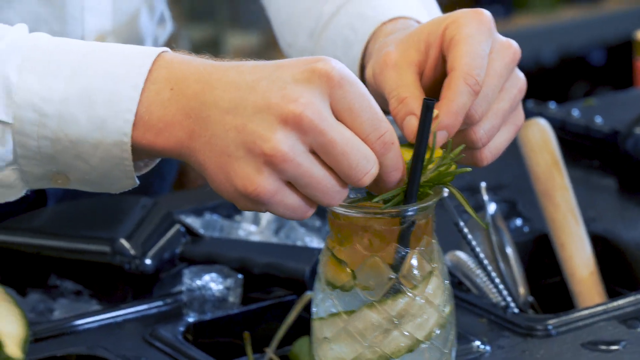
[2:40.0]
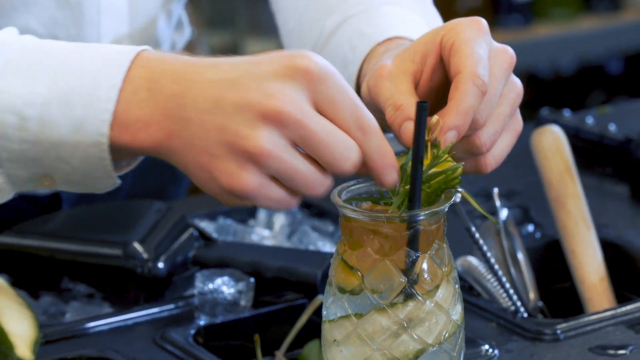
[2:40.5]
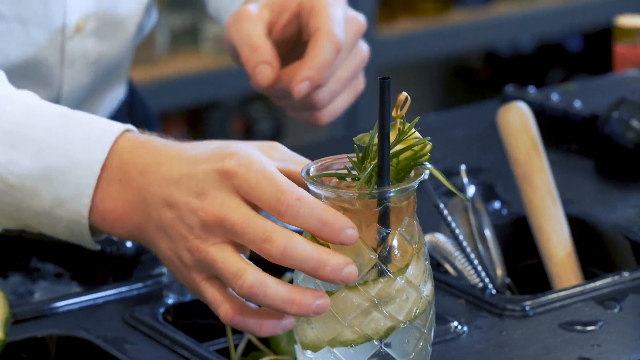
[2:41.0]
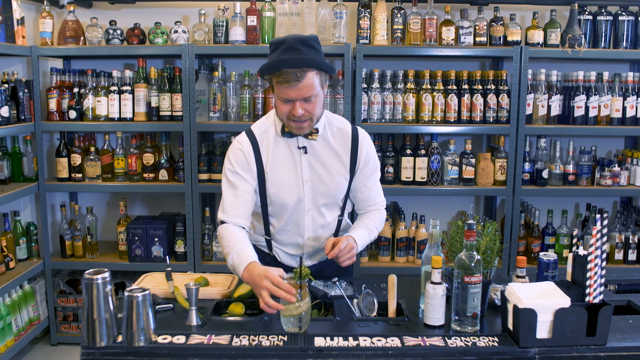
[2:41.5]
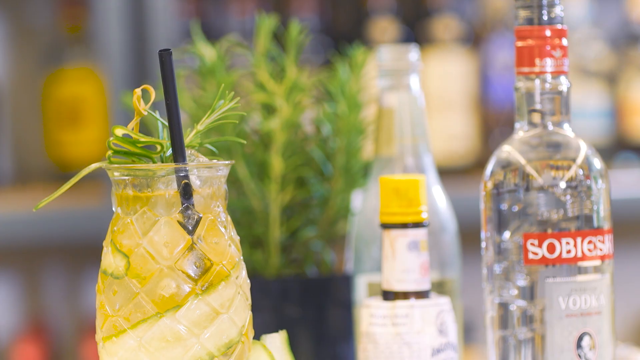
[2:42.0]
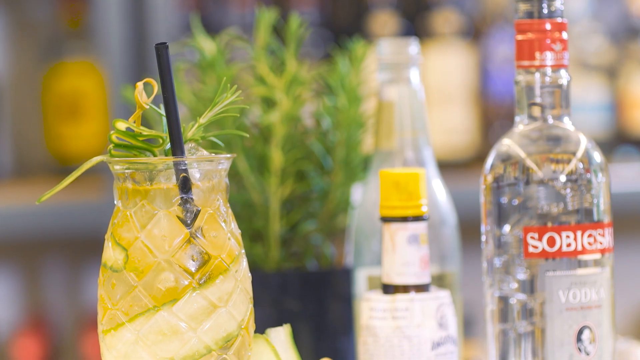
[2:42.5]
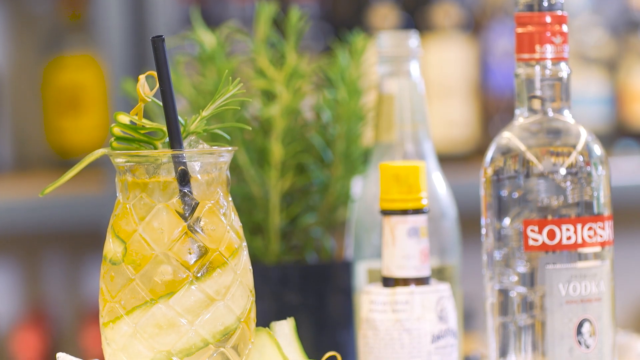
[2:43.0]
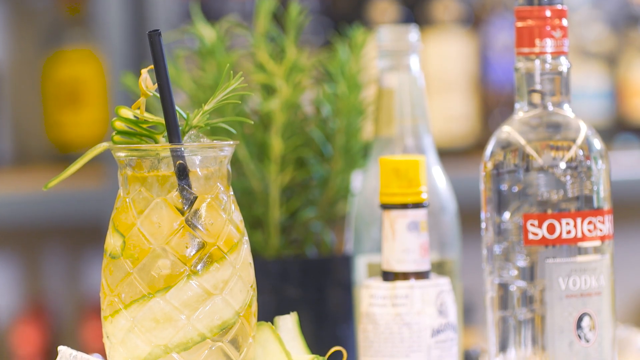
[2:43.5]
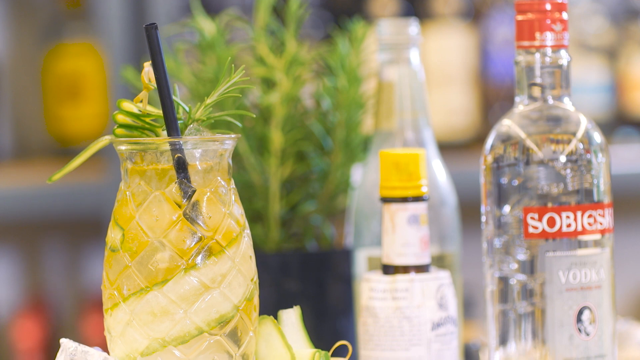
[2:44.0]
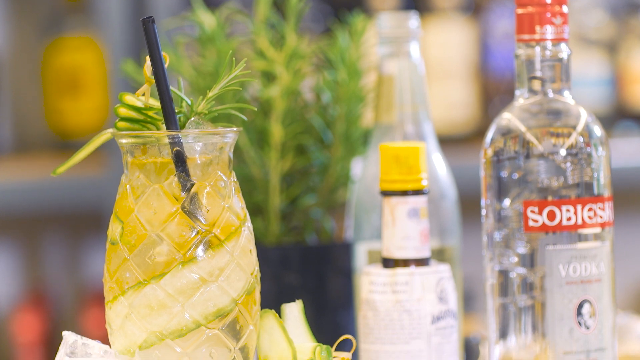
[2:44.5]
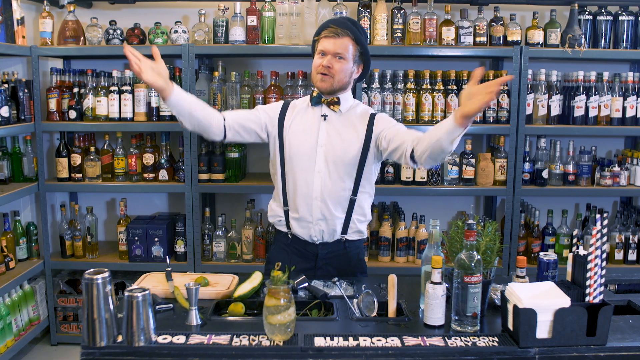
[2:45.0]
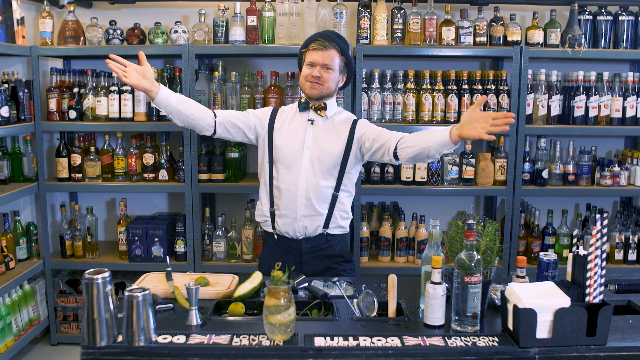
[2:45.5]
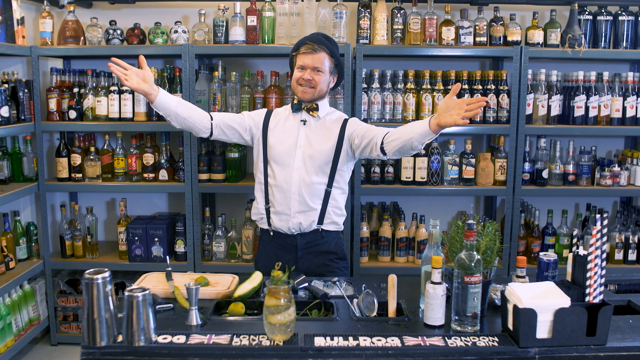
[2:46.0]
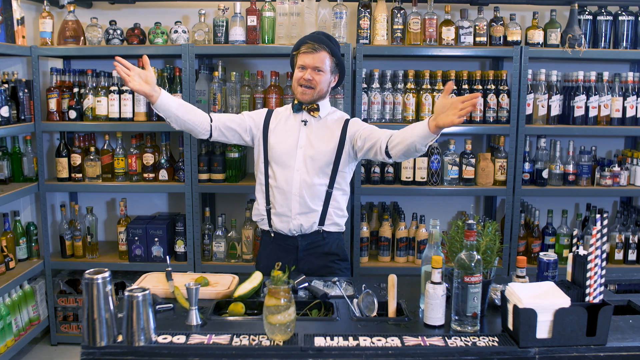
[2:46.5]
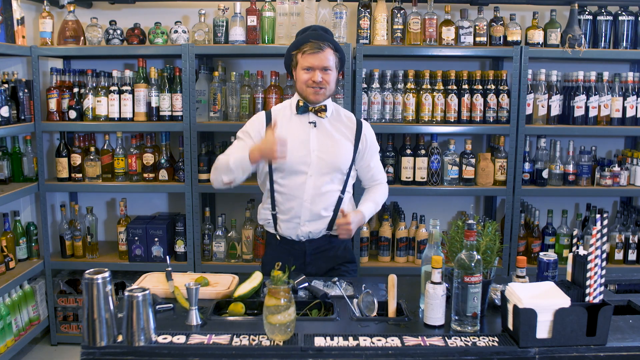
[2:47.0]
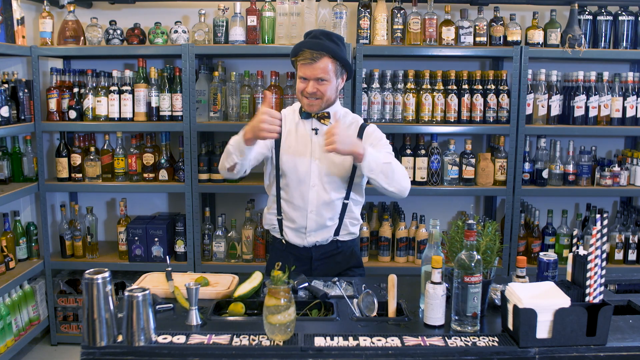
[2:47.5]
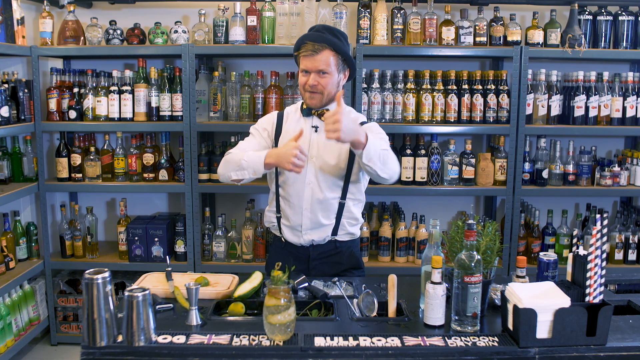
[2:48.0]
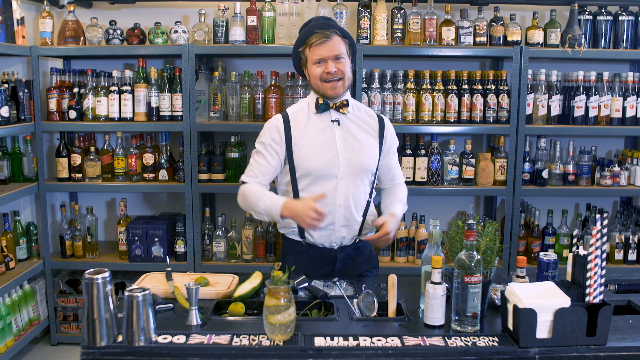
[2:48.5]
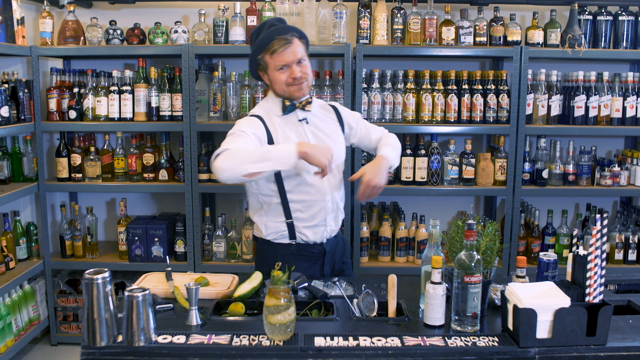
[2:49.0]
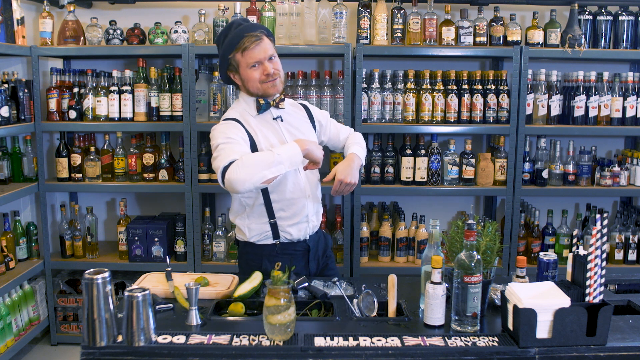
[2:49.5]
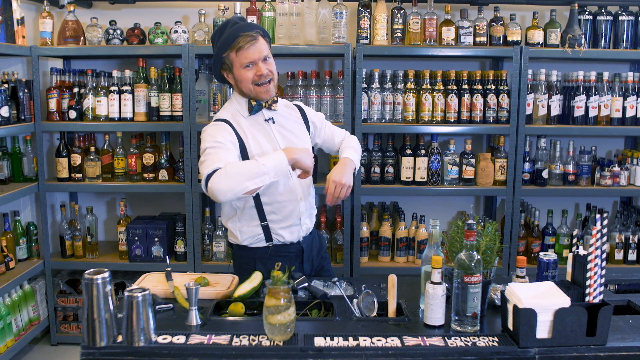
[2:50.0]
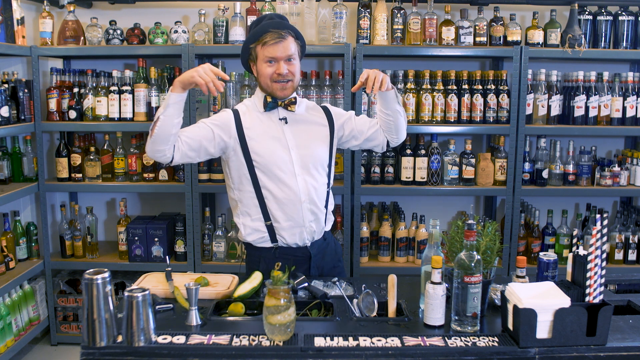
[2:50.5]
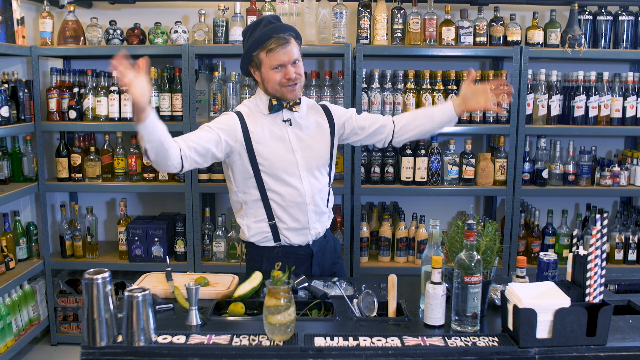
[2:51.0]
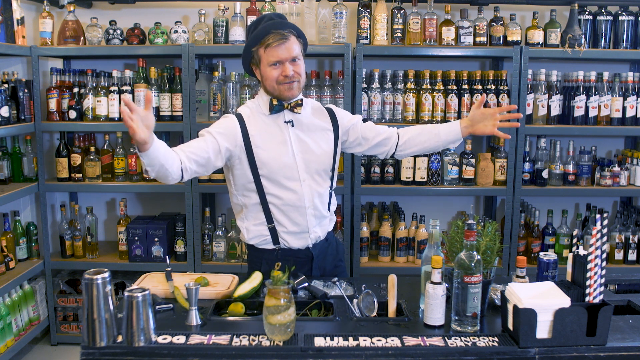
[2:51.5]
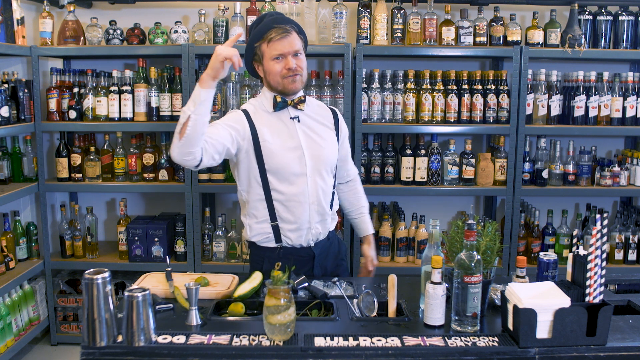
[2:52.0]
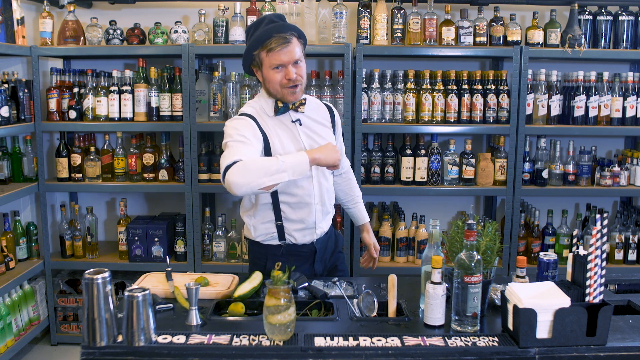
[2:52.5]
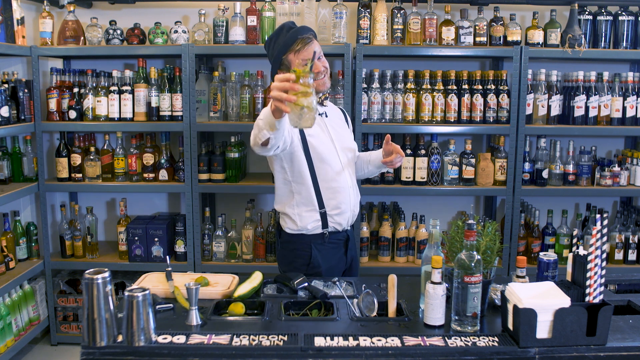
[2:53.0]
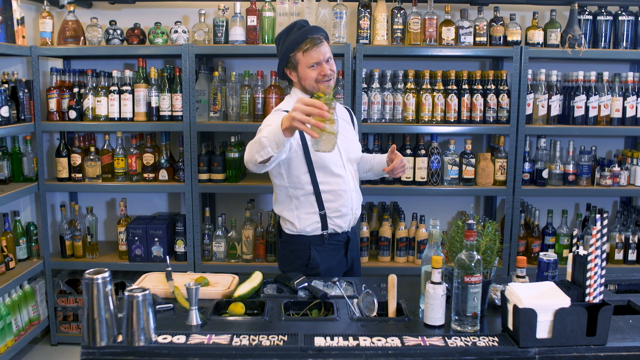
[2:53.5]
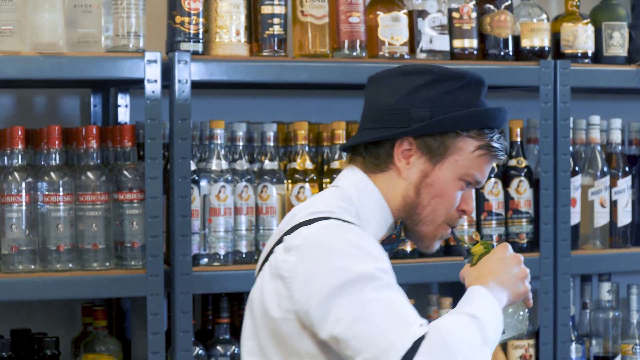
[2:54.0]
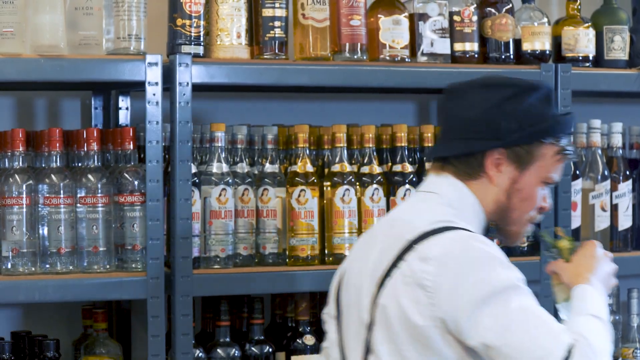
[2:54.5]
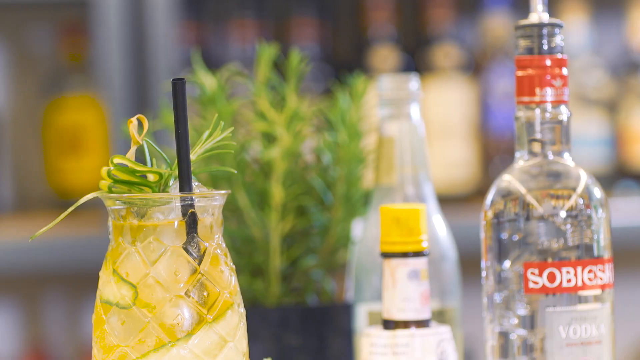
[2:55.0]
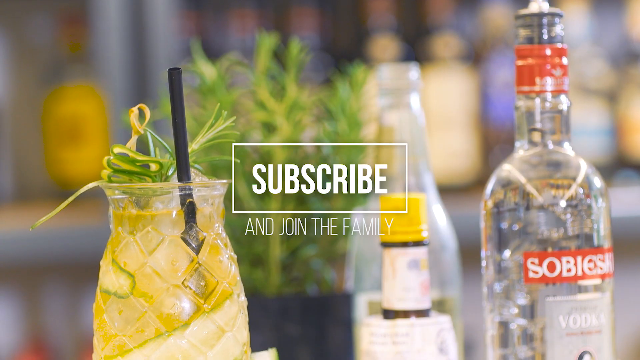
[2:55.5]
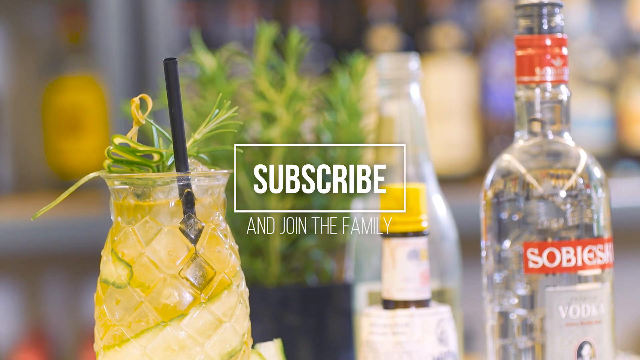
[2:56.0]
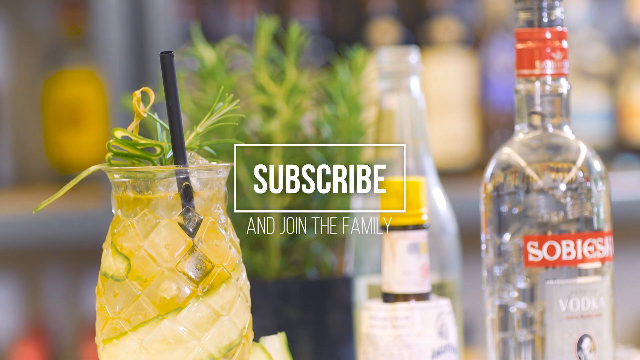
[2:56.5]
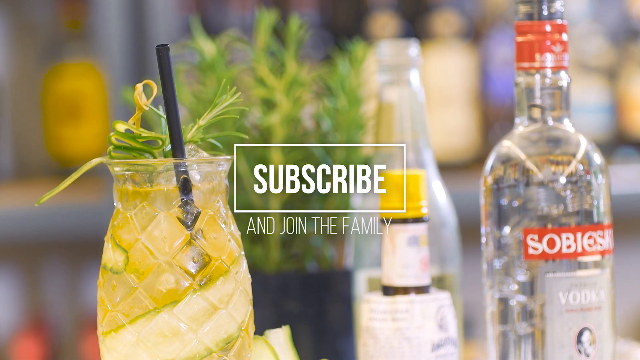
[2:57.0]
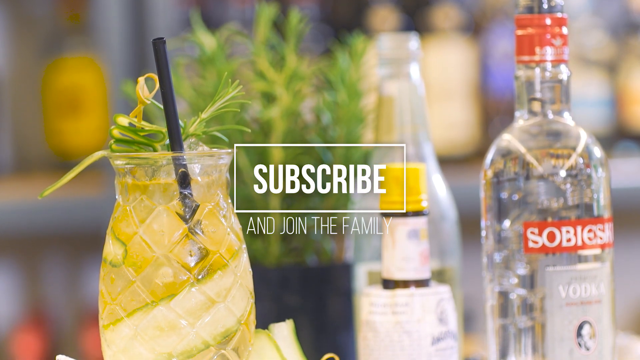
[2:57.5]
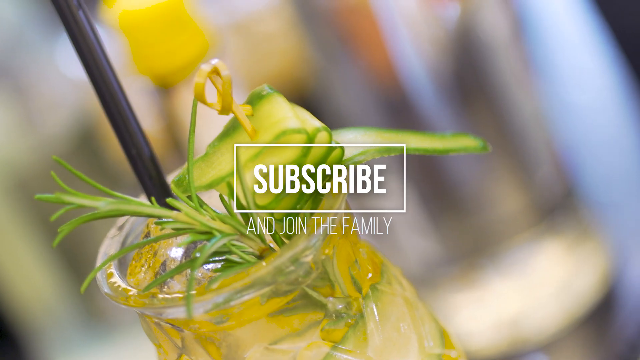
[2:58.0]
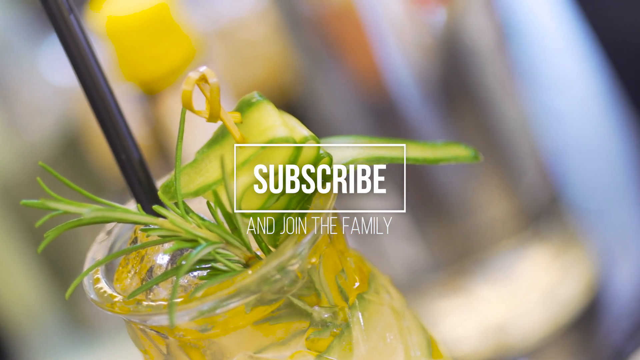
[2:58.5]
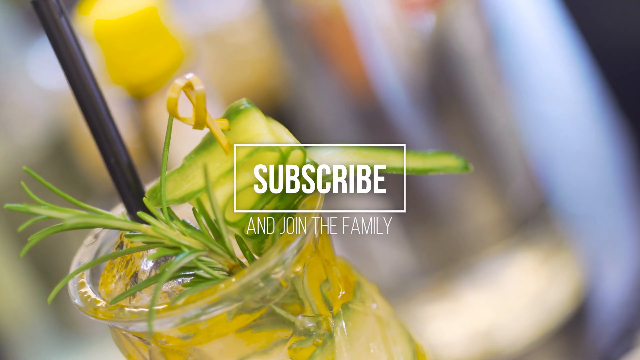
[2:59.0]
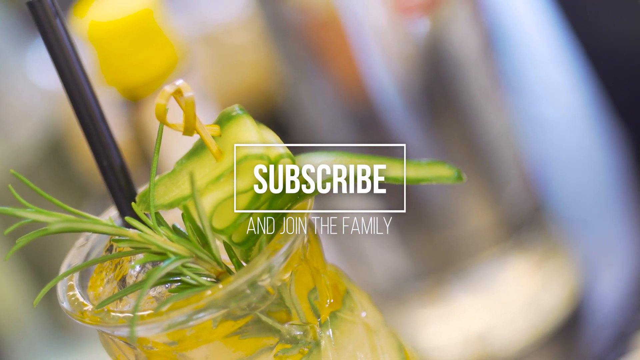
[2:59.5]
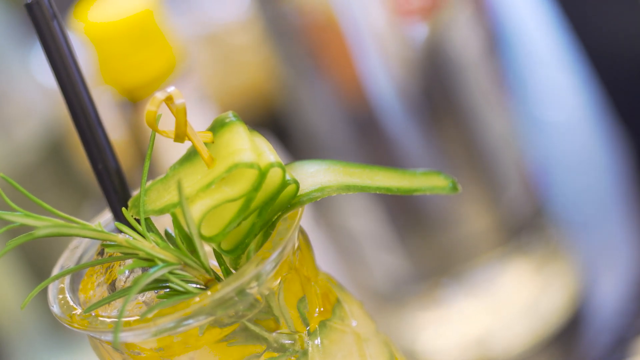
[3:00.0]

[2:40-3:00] In the final phase of the Moscow Mule preparation, Rasmus uses two hands to insert a black straw. The video transitions to the fully prepared Moscow Mule in a glass cup stylized like a pineapple, with the Angostura Bitter bottle with a yellow cap and the vodka bottle with a red cap next to it. The glass with the drink revolves. Rasmus then has both hands extended out as he speaks with excitement, and gives a thumbs up with both hands. He switches position, holds the drink in his hand, takes a sip and walks away. The video transitions back to the glass of Moscow Mule alongside the Angostura Bitter bottle and the vodka bottle, and white text appears in the middle of the screen: "subscribe and join the family."